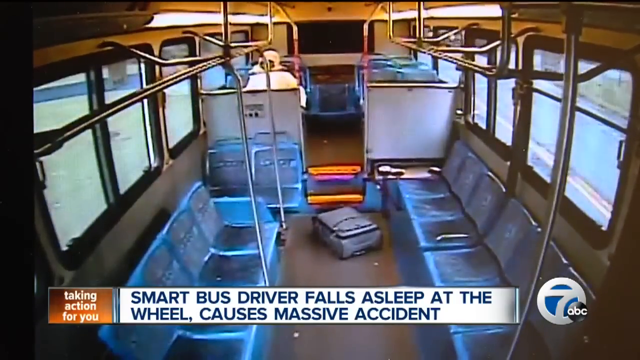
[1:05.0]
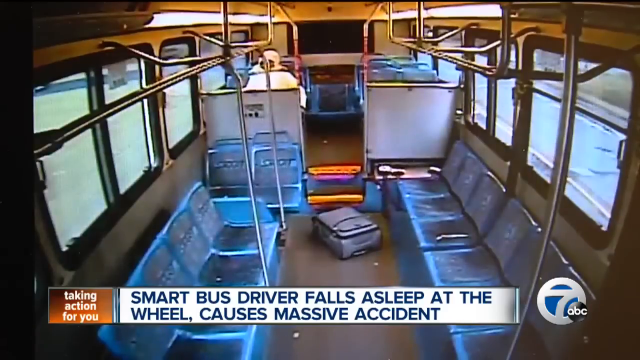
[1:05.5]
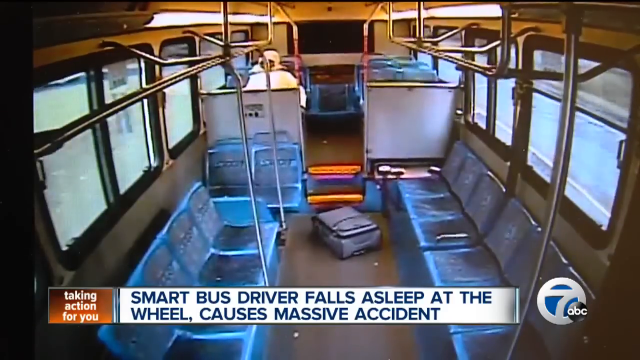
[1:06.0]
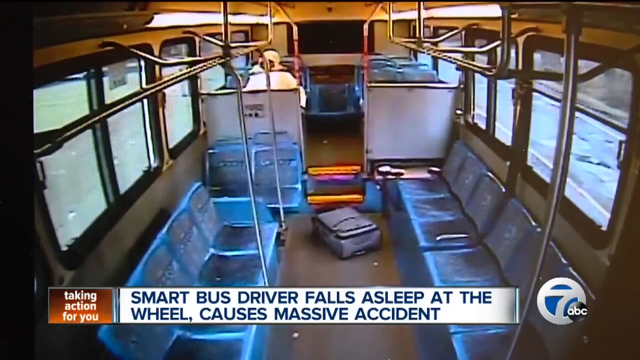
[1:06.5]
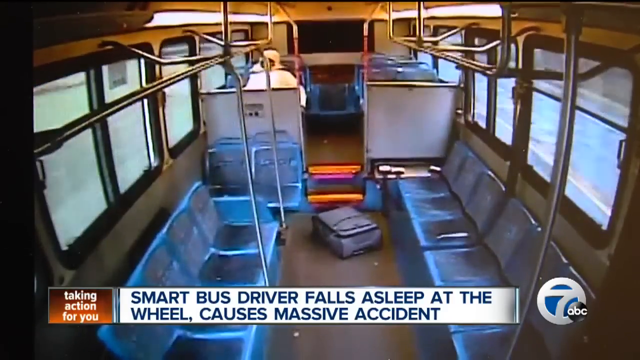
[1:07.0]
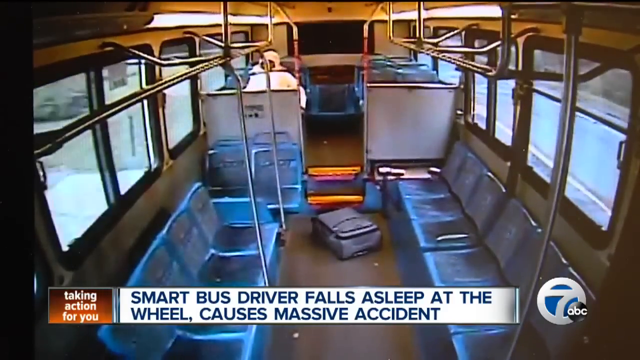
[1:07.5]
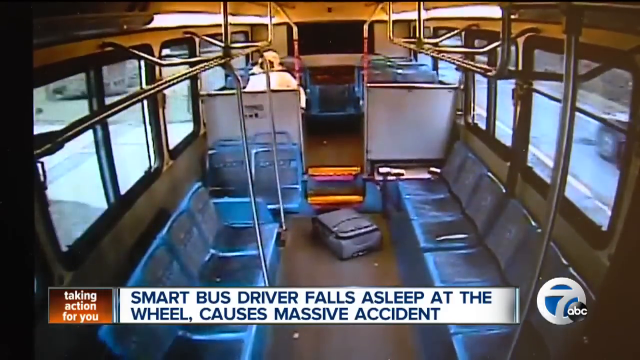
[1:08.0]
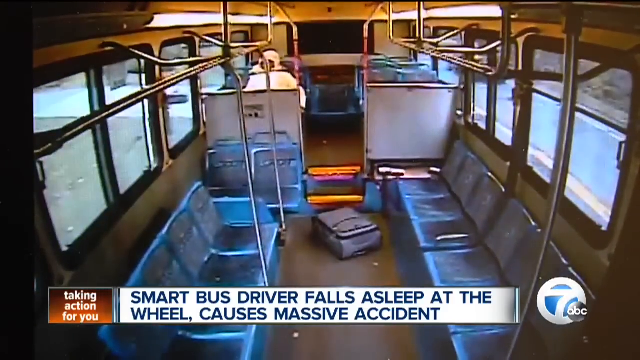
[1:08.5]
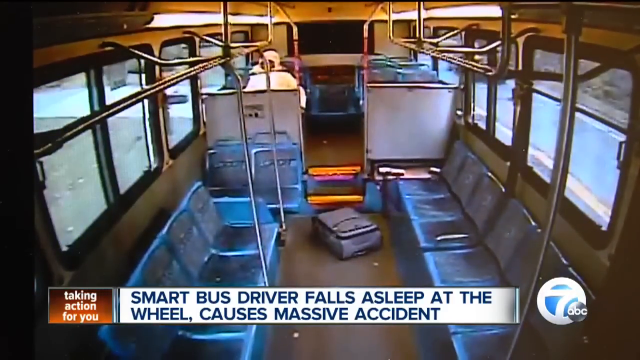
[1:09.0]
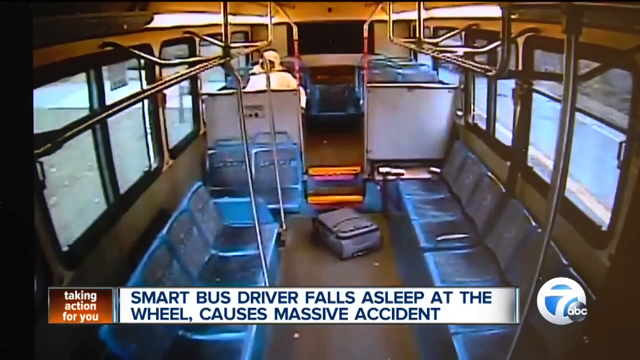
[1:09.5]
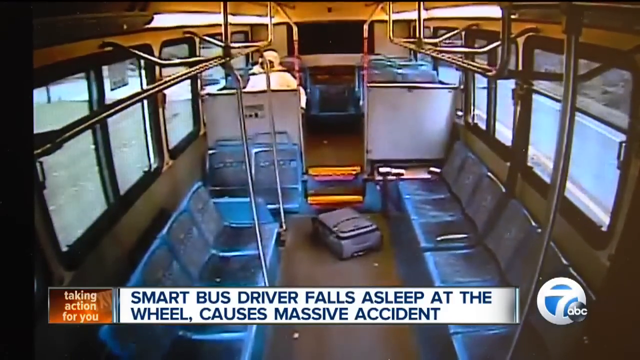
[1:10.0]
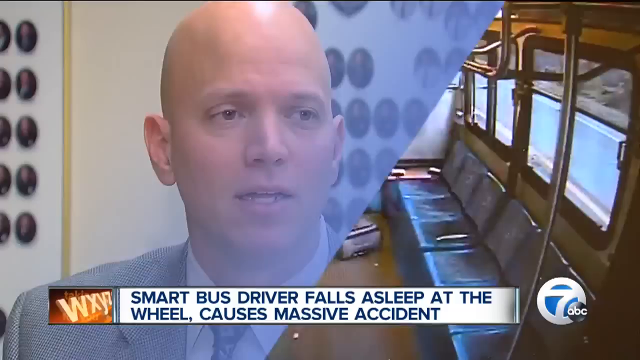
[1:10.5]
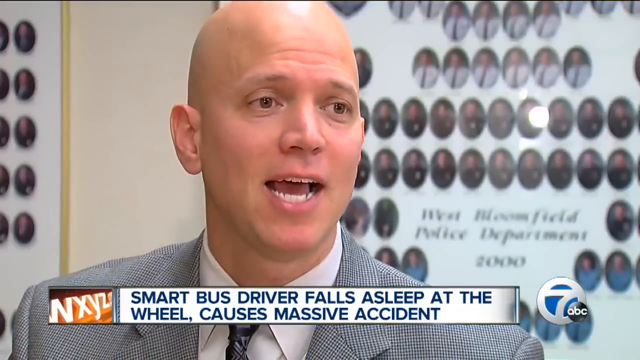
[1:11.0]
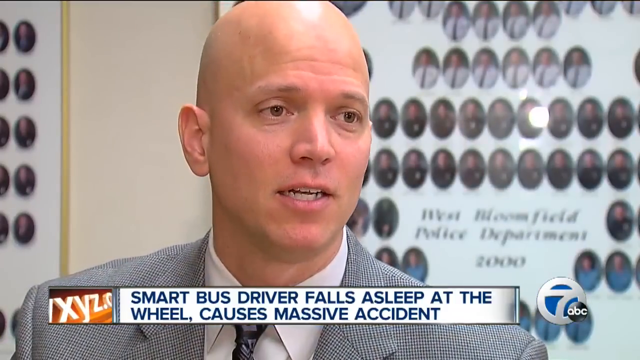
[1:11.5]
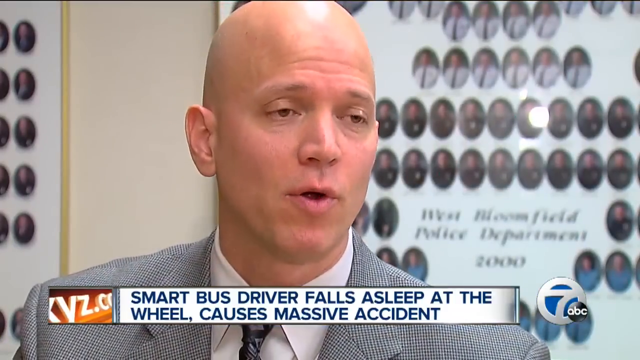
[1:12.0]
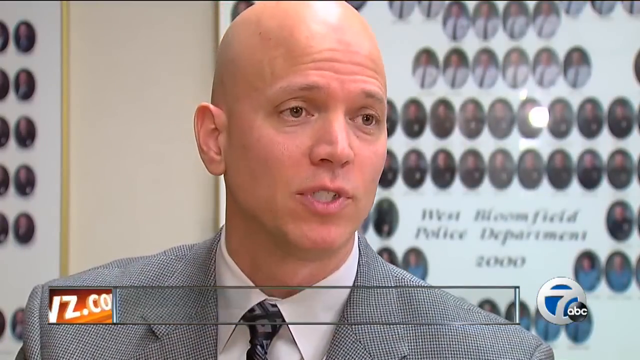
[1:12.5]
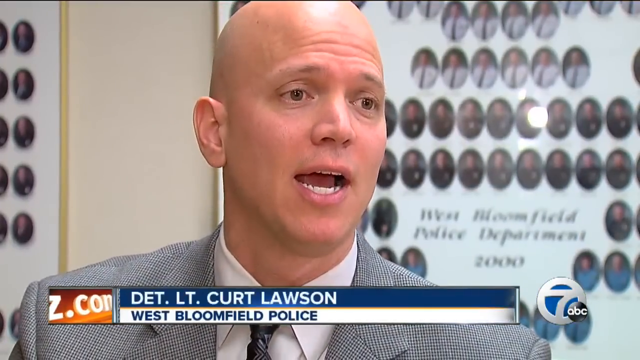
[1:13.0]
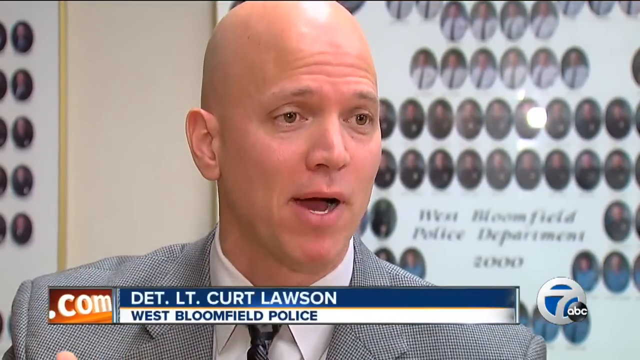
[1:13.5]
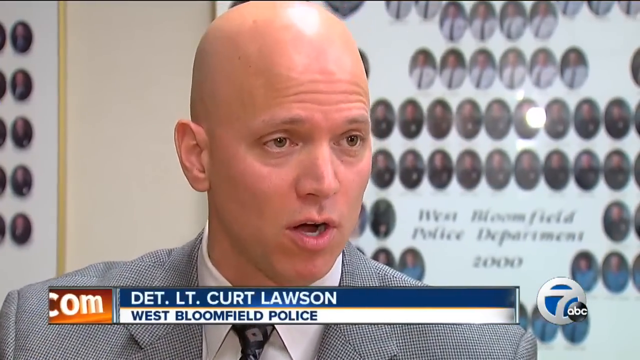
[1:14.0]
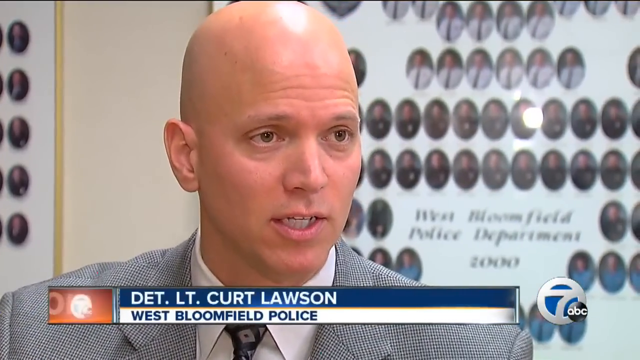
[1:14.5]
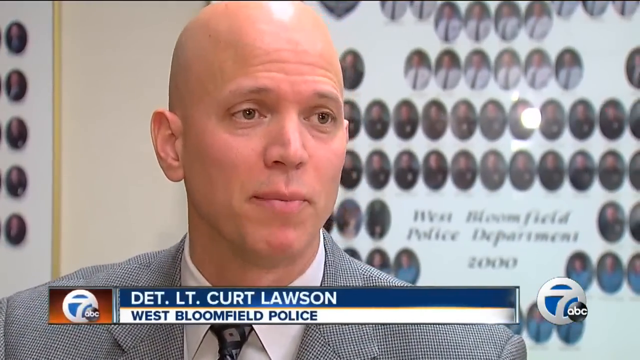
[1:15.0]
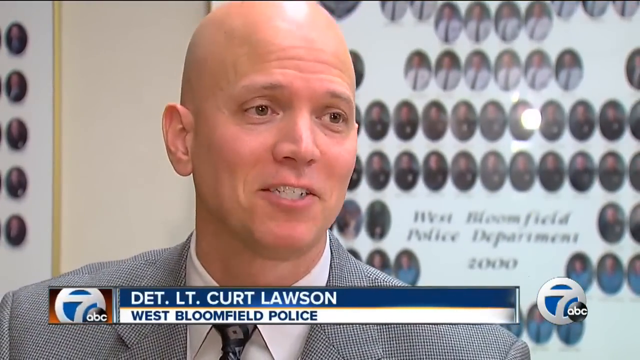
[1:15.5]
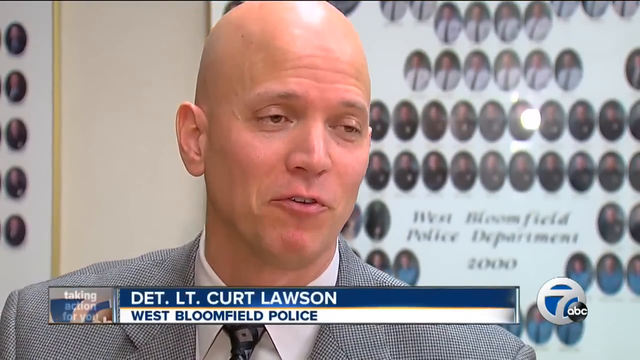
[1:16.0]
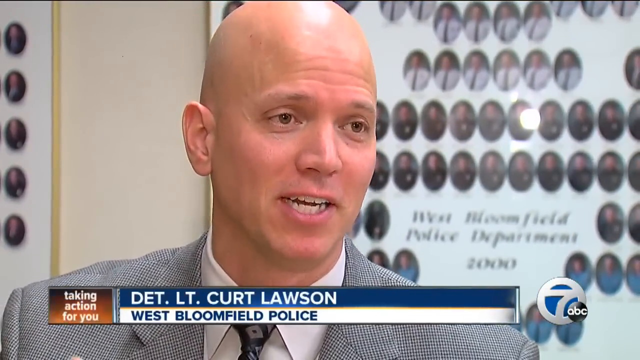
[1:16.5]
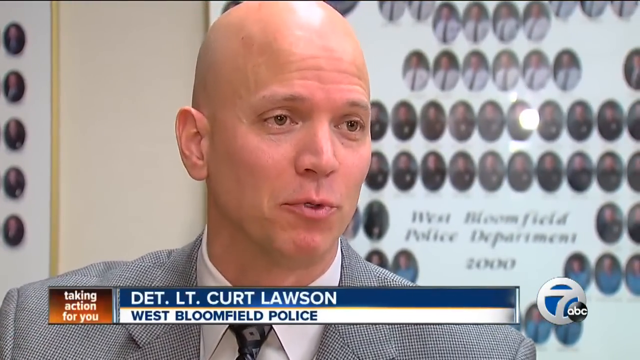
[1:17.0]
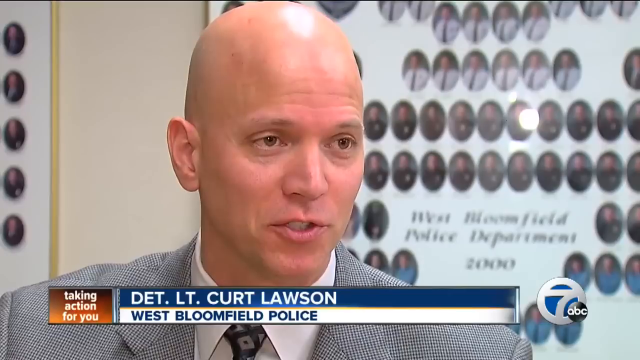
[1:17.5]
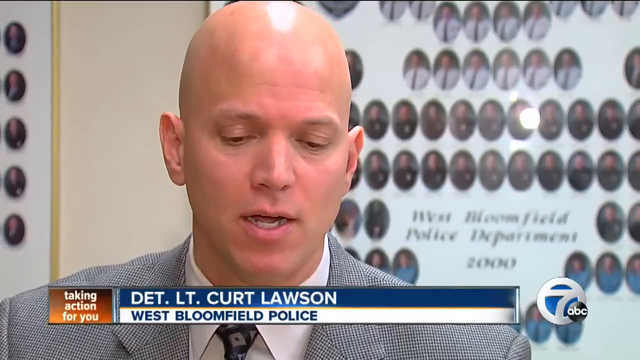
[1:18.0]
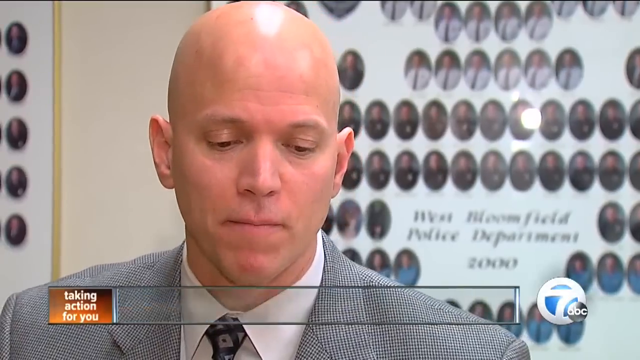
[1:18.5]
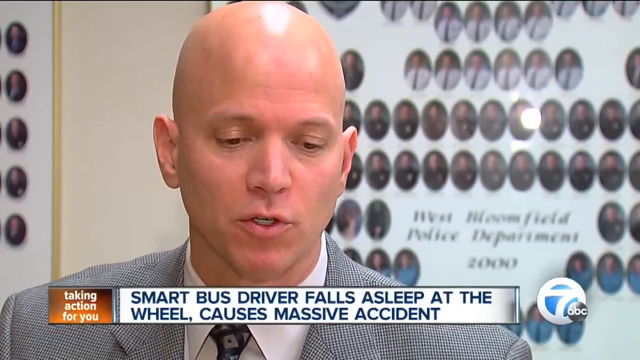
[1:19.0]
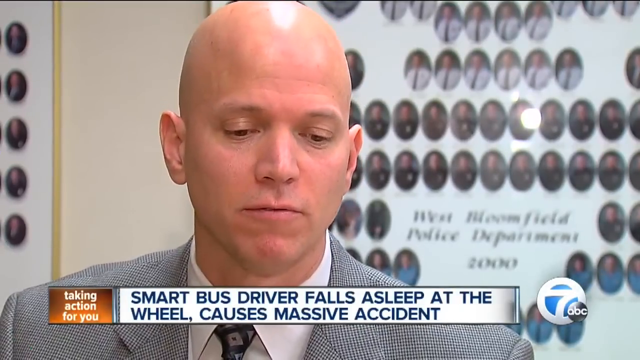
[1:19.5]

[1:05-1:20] The slow-motion view inside the bus continues. A close-up then shows a bald-headed man in a gray suit, a police officer, speaking on camera, before the view returns to the bus. He is identified as Detective Lieutenant Curt Lawson with West Bloomfield Police. Behind him is a poster that appears to show law enforcement officers. The area is lighted and looks like some sort of office space.